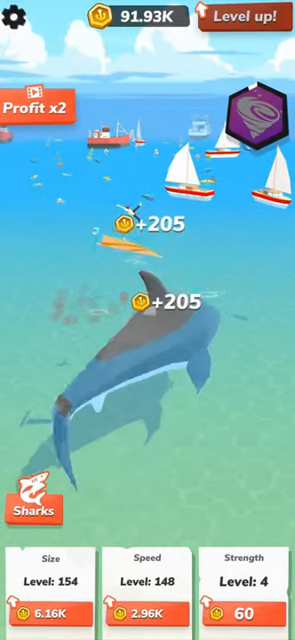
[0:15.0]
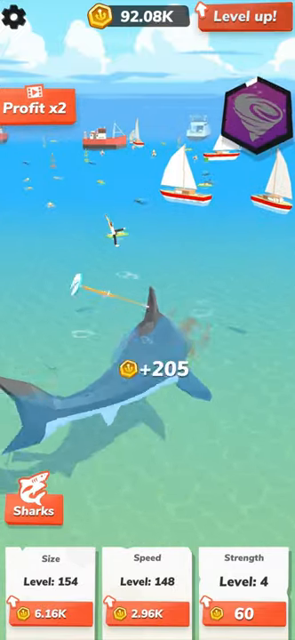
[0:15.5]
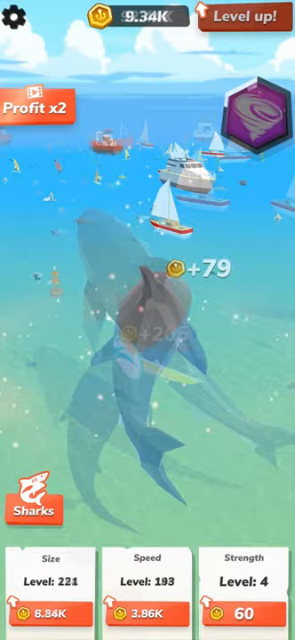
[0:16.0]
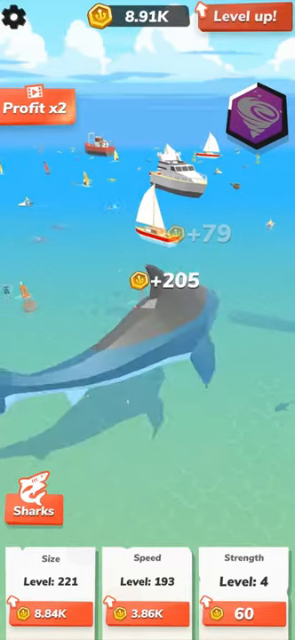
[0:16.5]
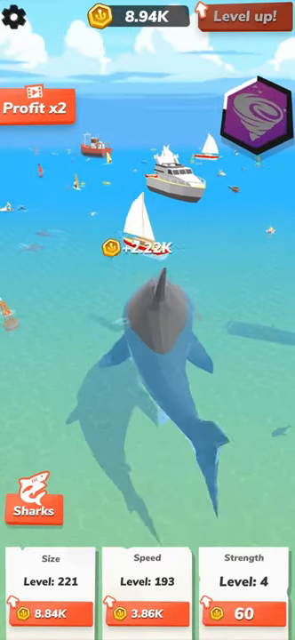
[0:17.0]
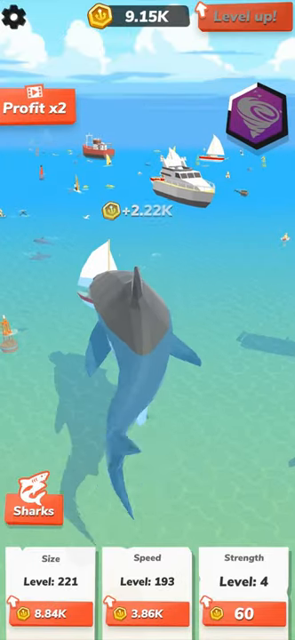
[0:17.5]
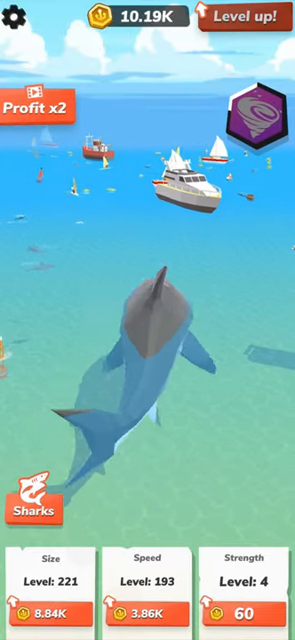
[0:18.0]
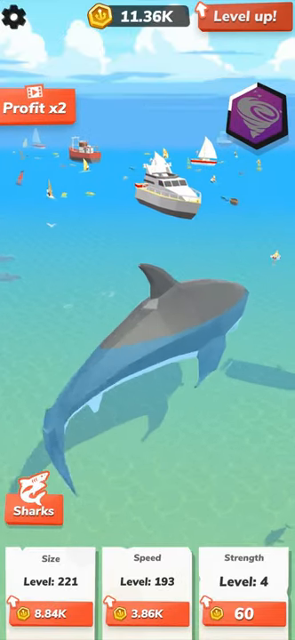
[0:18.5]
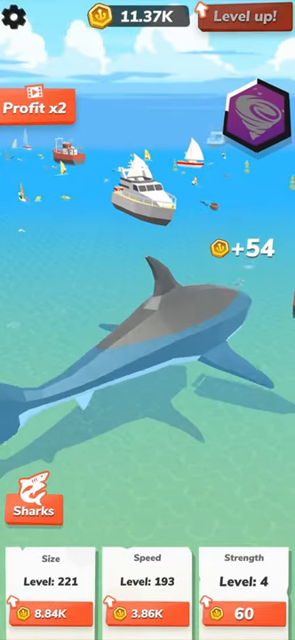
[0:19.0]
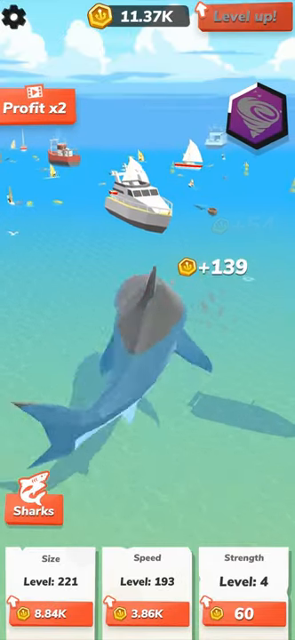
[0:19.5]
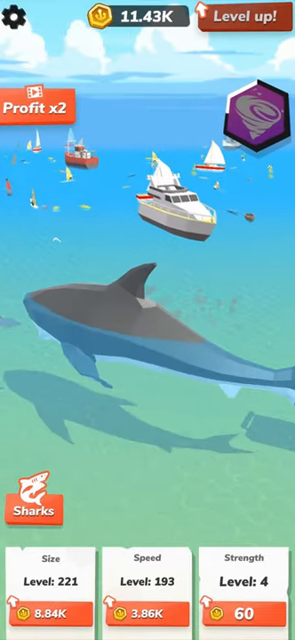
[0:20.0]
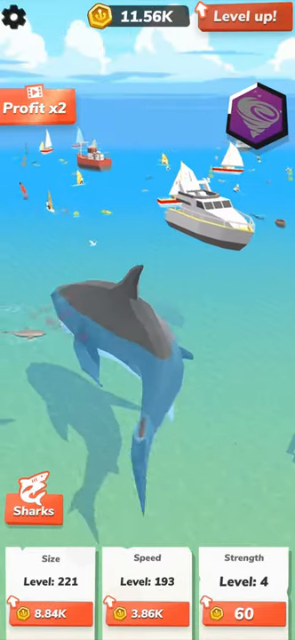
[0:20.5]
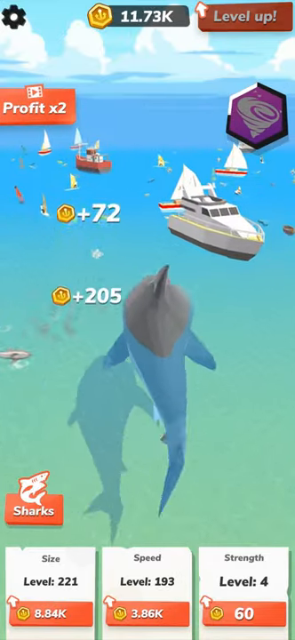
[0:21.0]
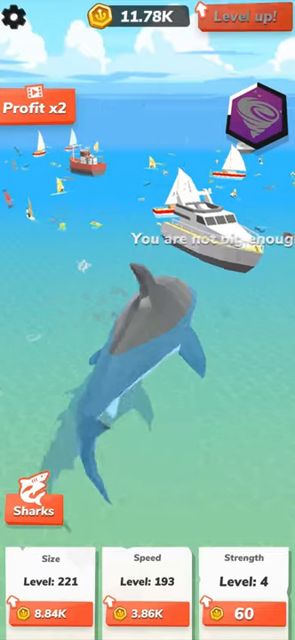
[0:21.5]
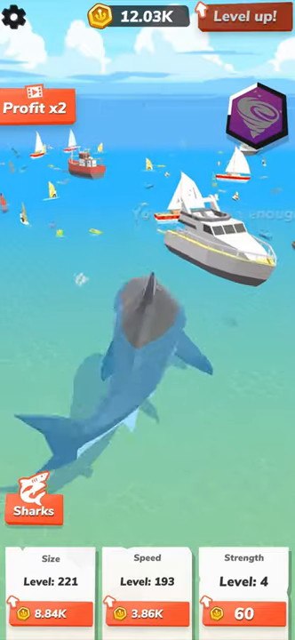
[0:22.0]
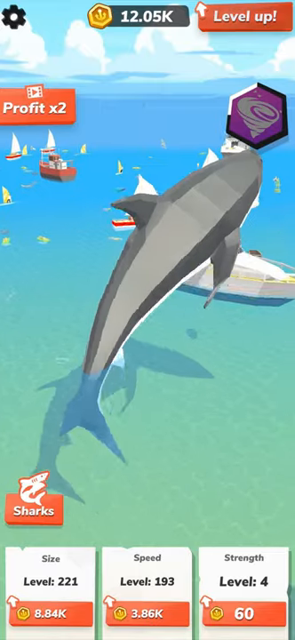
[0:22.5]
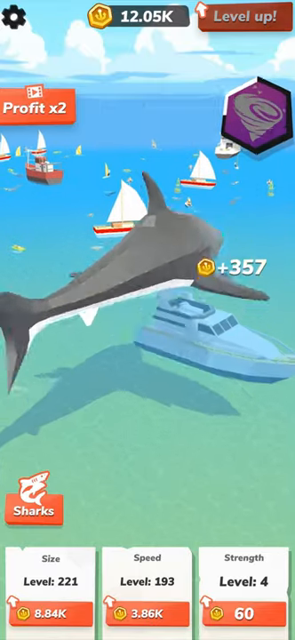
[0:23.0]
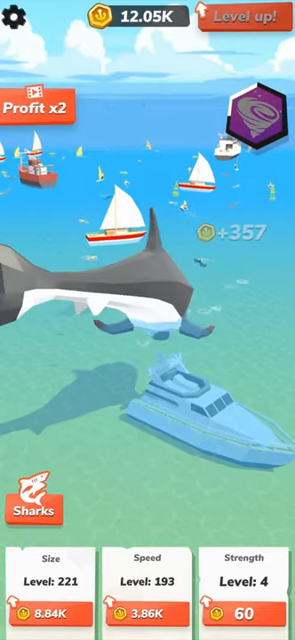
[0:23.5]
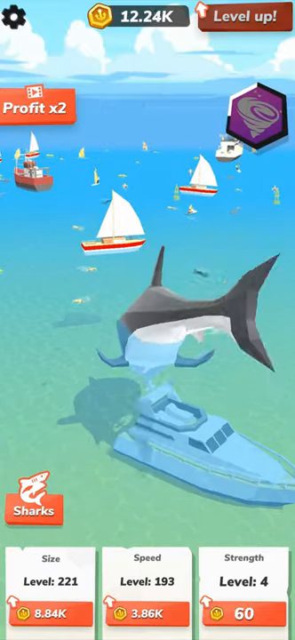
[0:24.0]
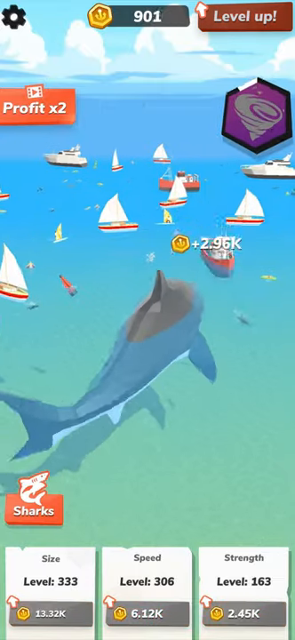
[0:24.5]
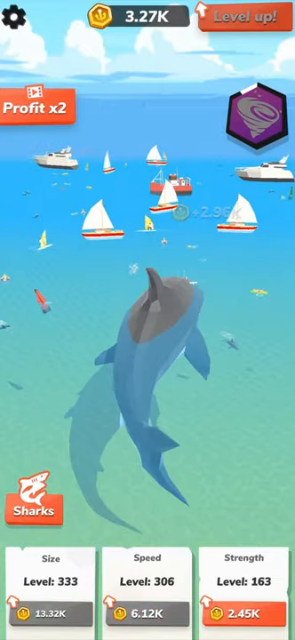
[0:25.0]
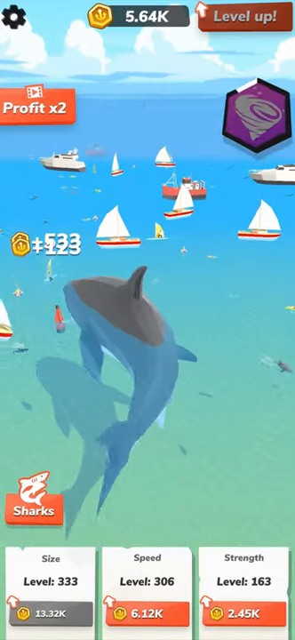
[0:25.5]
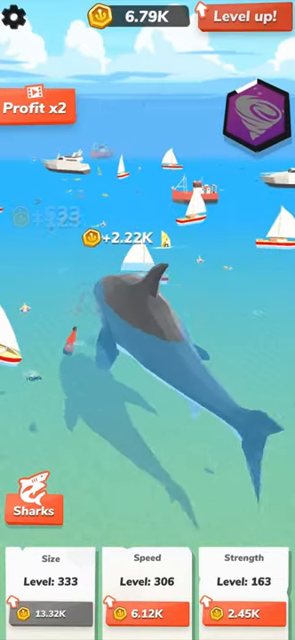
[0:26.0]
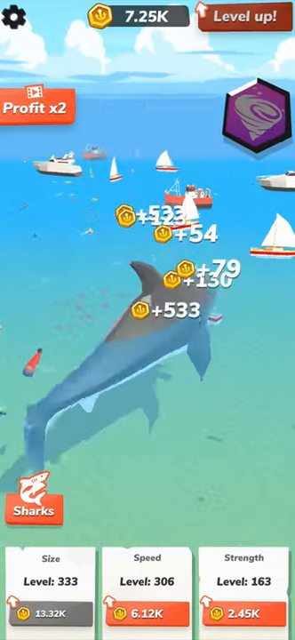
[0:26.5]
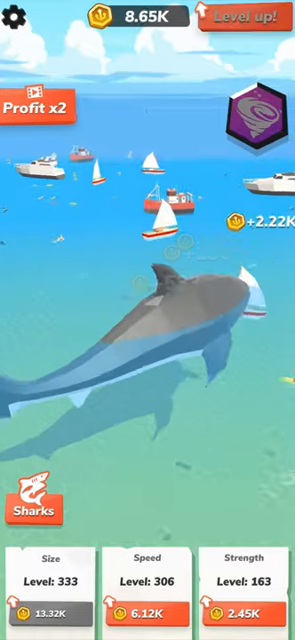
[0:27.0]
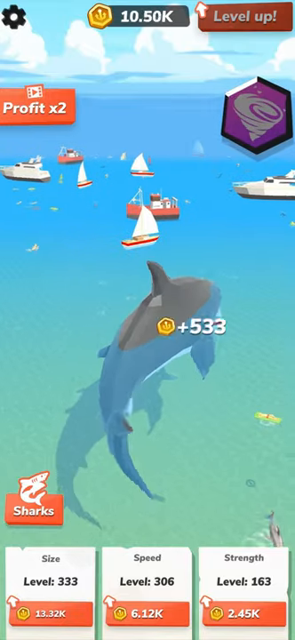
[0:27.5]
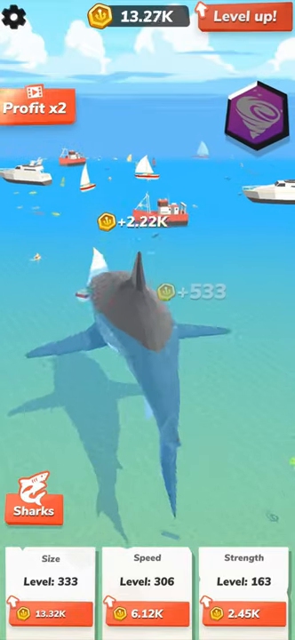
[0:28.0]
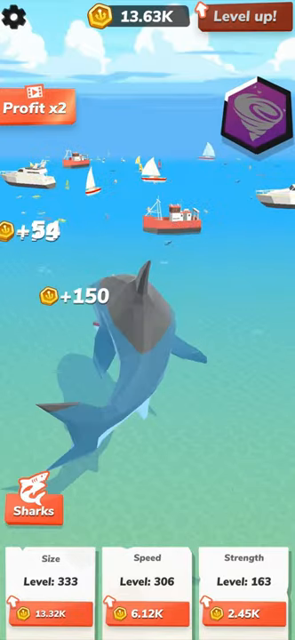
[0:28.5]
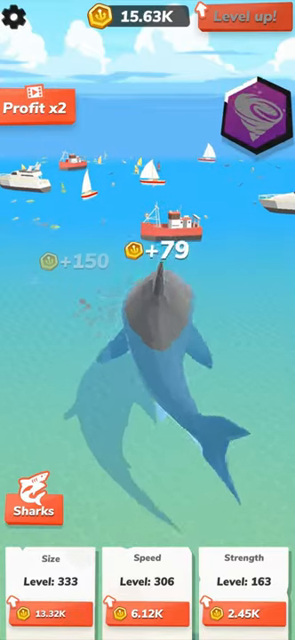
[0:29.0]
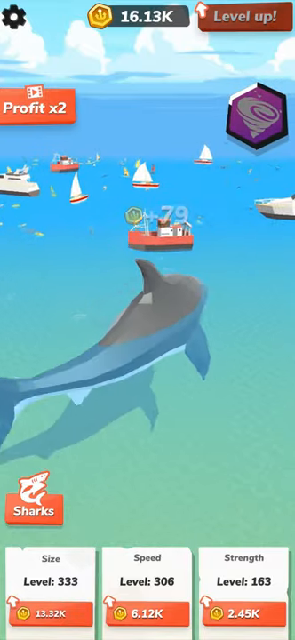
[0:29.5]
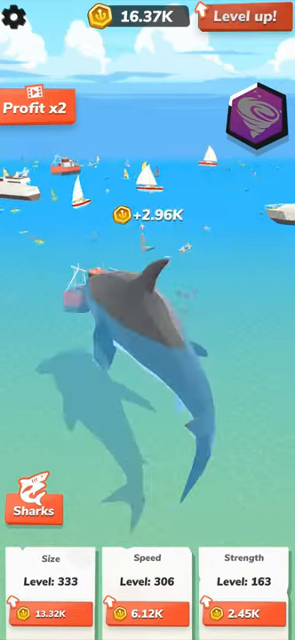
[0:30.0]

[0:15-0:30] The shark goes through the water, eats something, and gets points. It sinks a boat, then what looks like a tugboat, then another sailboat, and another tugboat, gaining more points with each. As it gains points, the cyclone icon's border goes from kind of black to white, probably indicating some sort of special power-up, and the shark levels up as it destroys more things. The shark is gray with a white belly, apparently meant to be a great white shark. In this digital game, destroying things produces little coins with various point values attached; the shark seems to gain points either by sinking boats or eating people. There are tons of boats in this harbor area: some bigger ones like yachts, some tugboats, some really small sailboats, and some bigger sailboats. Text says "sharks" with a shark next to it, so the game is probably called Sharks. The water is a greenish blue in the foreground and a deeper blue in the middle background.